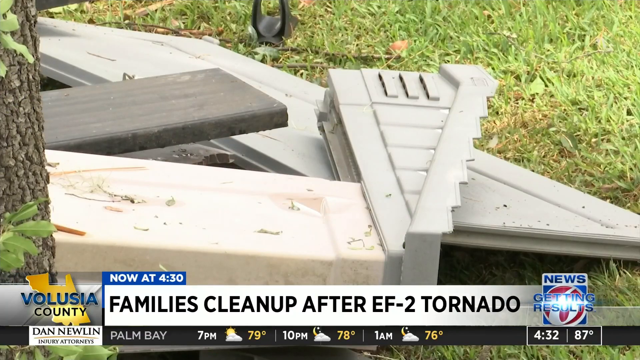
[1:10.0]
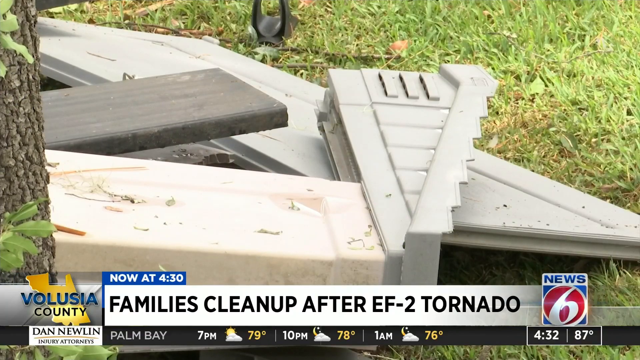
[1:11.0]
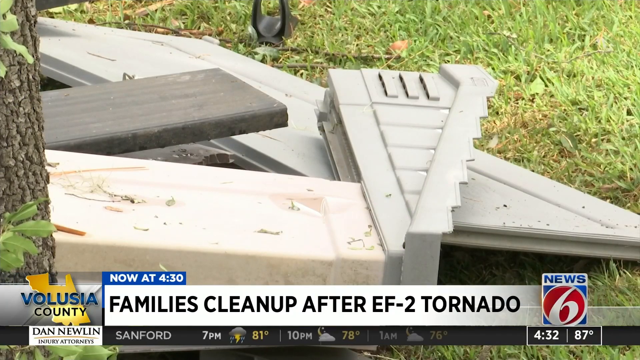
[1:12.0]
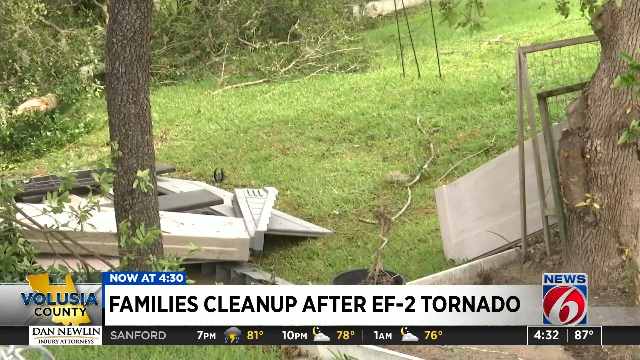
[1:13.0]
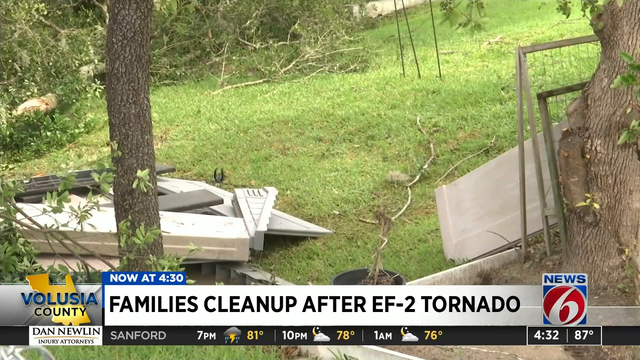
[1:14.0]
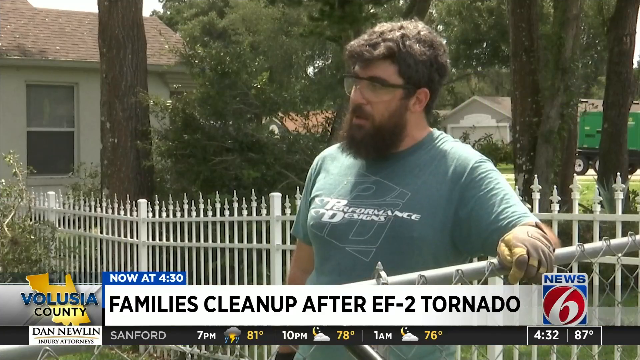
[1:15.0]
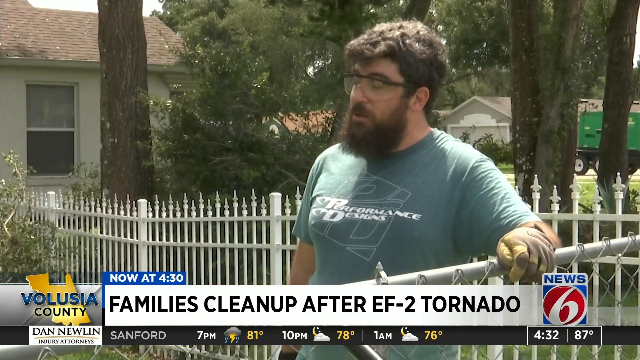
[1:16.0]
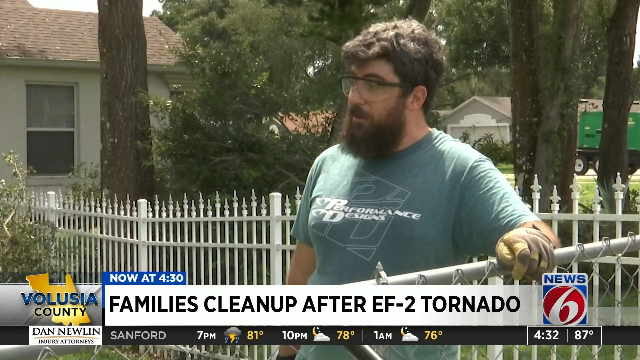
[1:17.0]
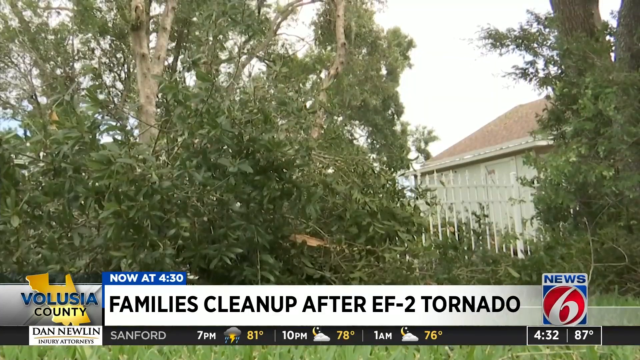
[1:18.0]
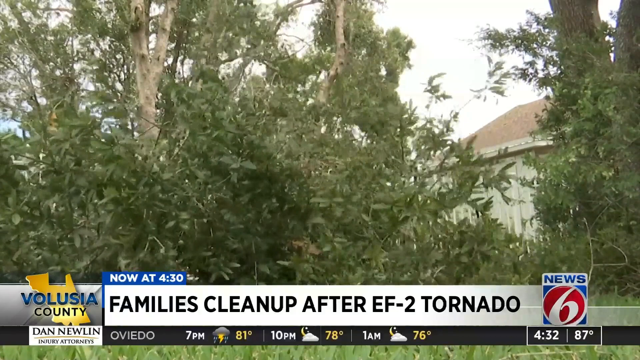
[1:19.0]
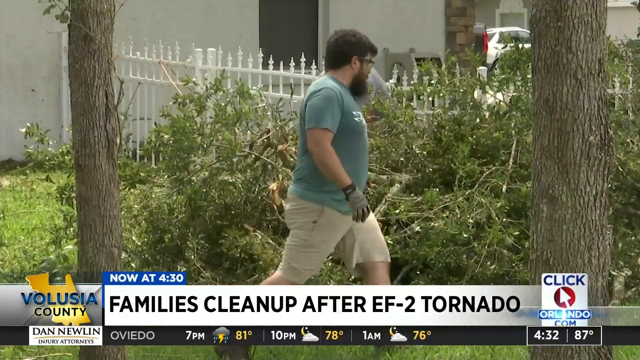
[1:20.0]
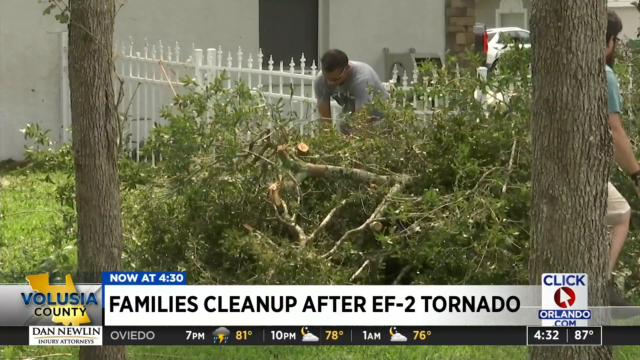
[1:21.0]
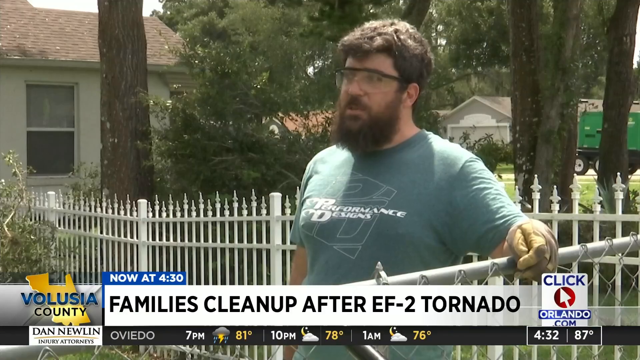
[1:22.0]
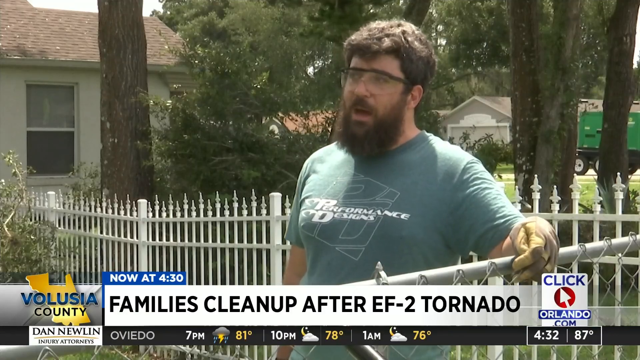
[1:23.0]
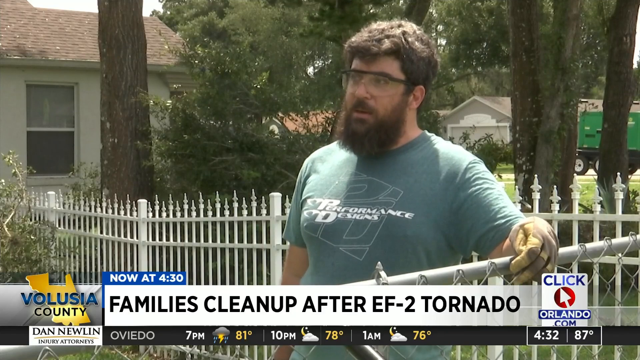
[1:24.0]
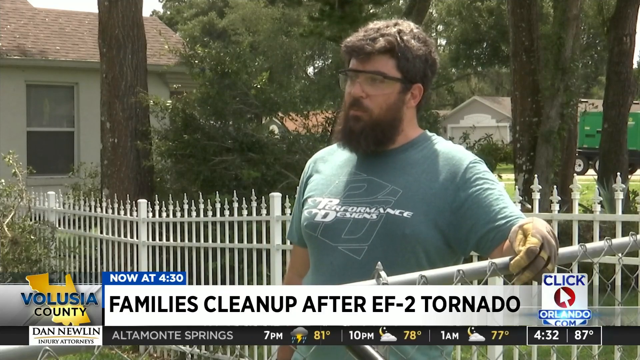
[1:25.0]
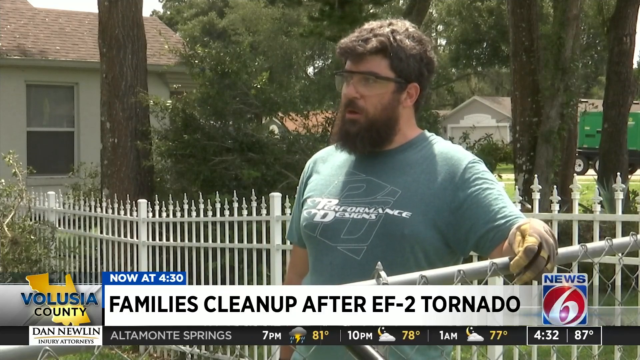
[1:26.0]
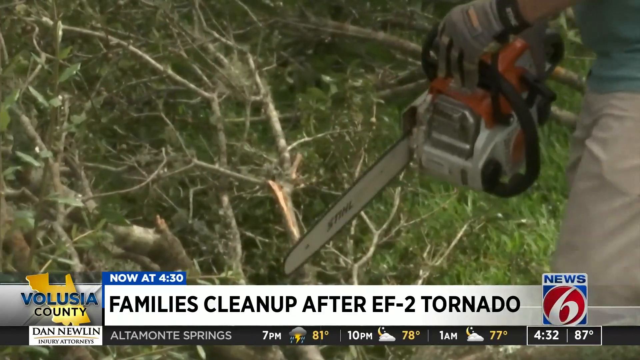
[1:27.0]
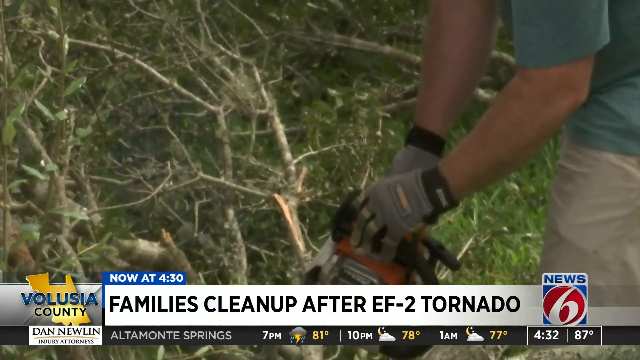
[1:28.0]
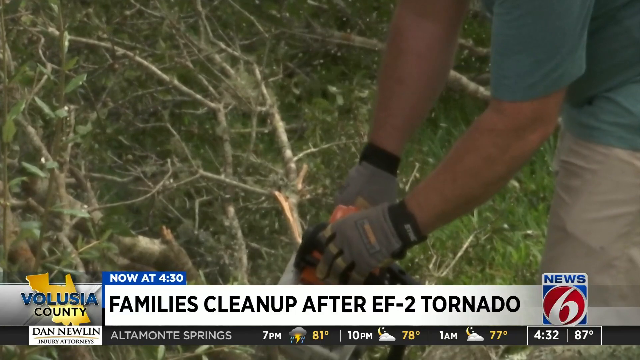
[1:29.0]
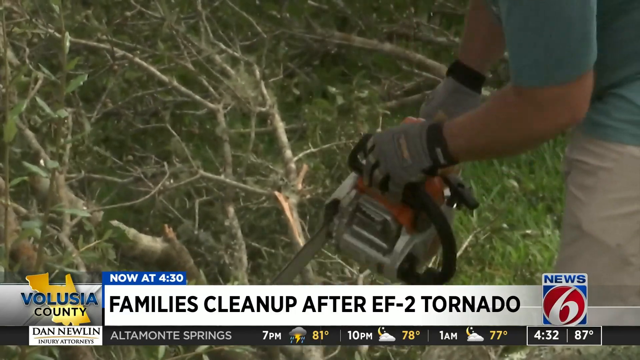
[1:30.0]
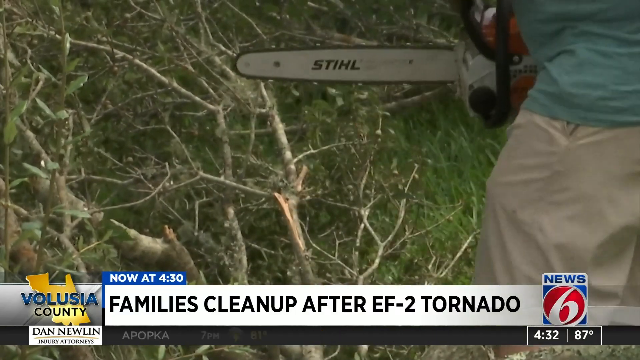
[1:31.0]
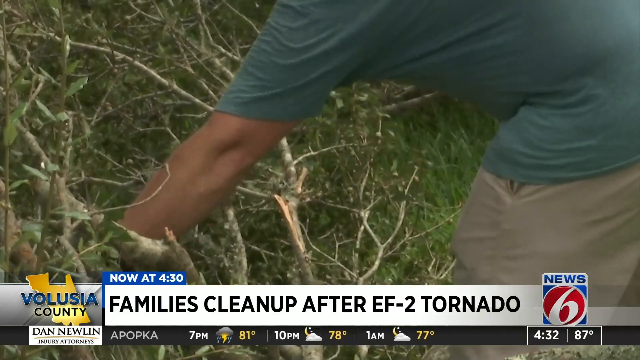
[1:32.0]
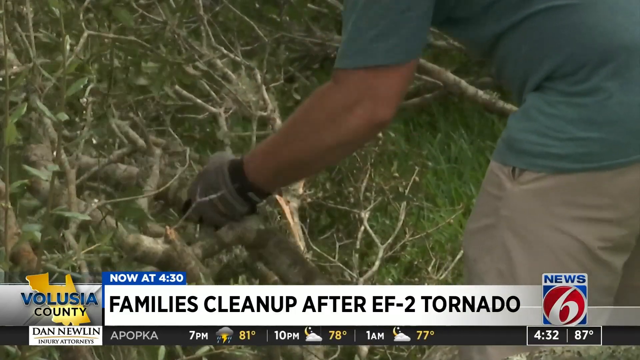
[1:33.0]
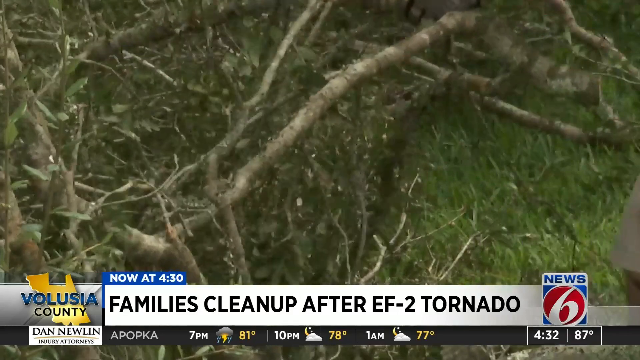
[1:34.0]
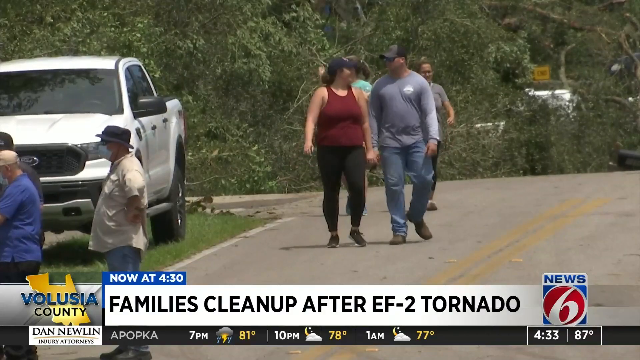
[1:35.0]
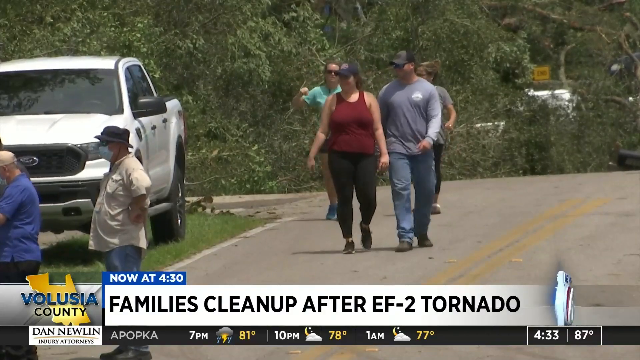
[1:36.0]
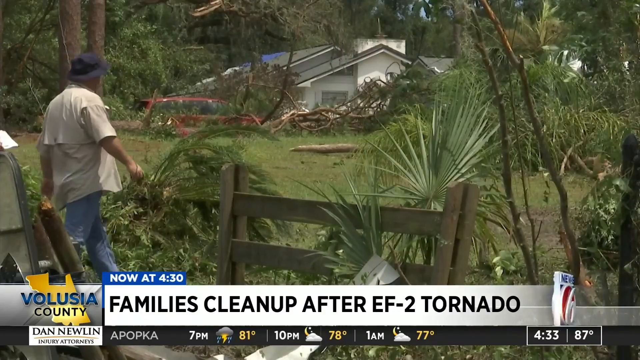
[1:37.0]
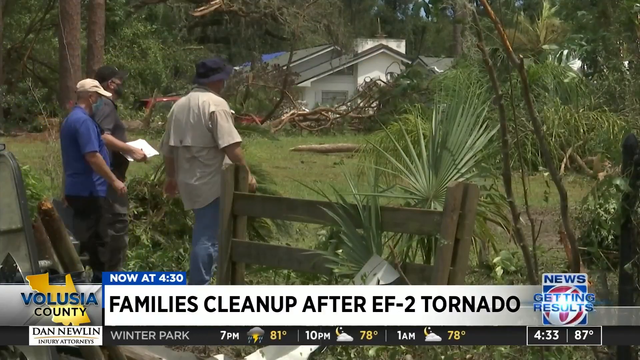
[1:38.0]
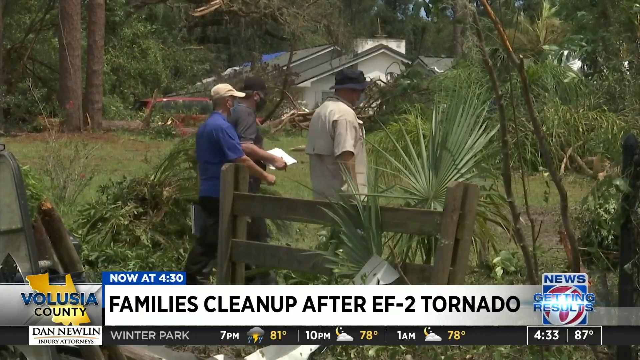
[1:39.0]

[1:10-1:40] Debris with jagged pieces lies in the grass, and on a tree beside it the bark and a few leaves are missing. A Channel 5 news logo with the text "getting results" appears on a blue, white and red background and stays on screen for a while. The view zooms back out to a man with glasses being interviewed. He cuts down trees with an orange steel chainsaw, clearing branches out of the way, and wears gloves. People walk down the street. At the end, there is a picture of a leaf.